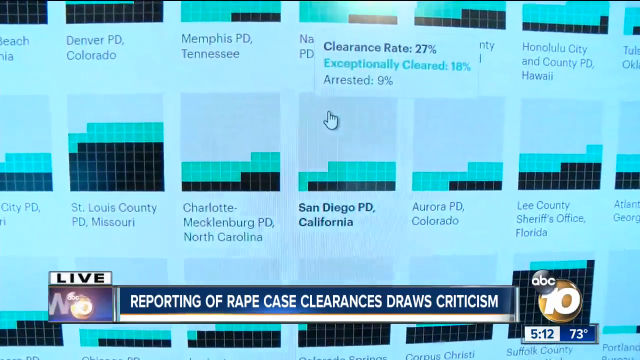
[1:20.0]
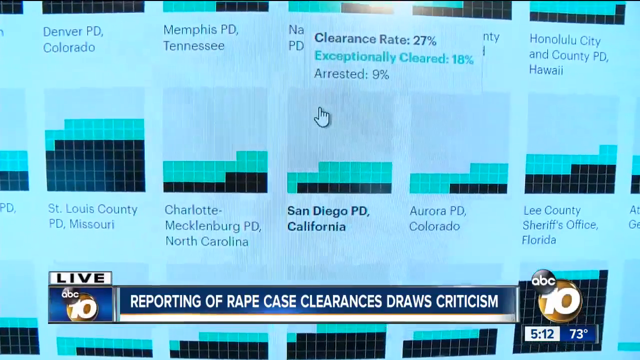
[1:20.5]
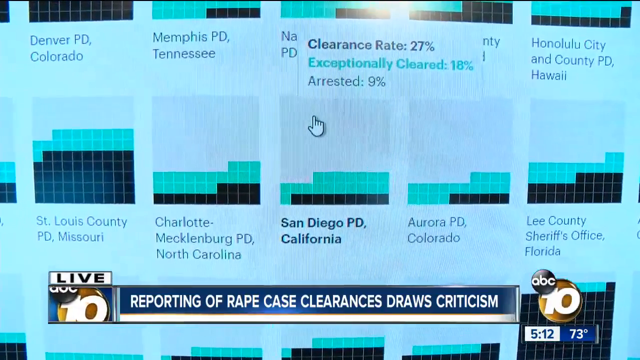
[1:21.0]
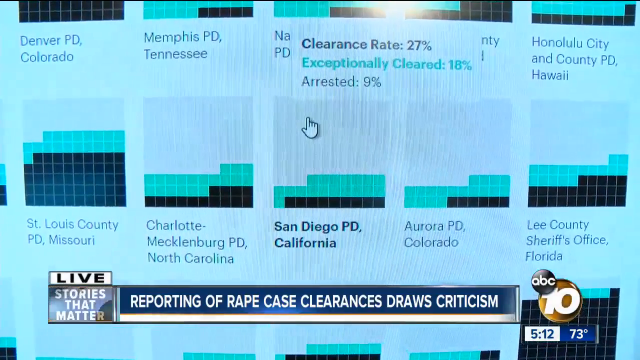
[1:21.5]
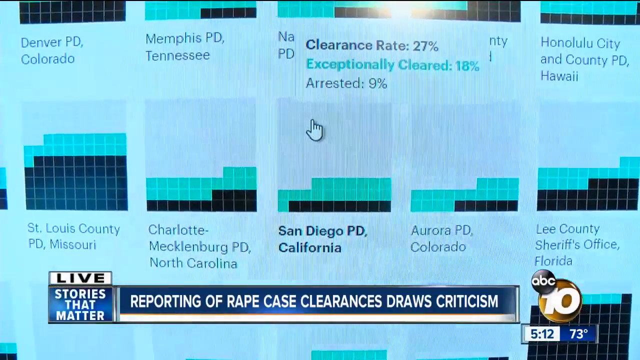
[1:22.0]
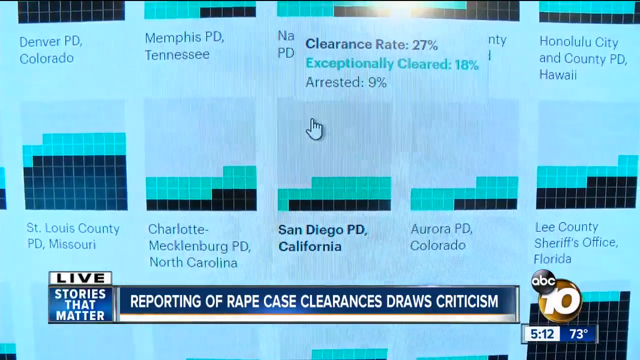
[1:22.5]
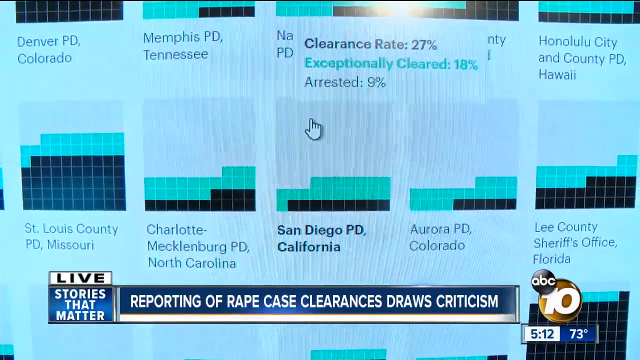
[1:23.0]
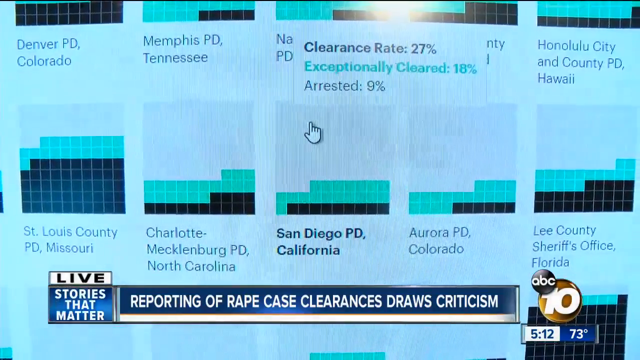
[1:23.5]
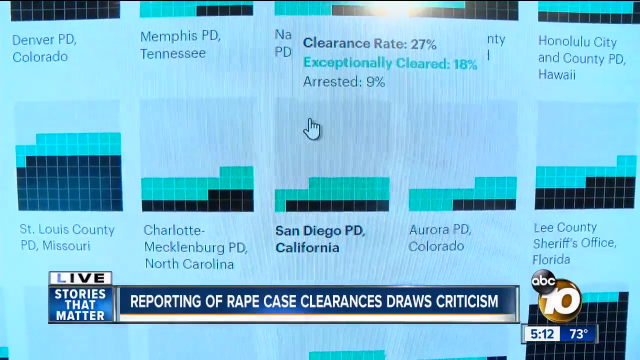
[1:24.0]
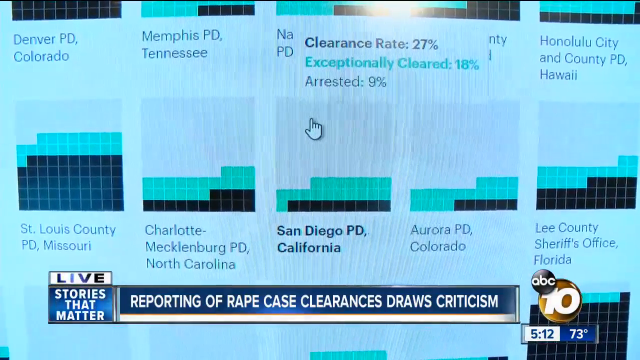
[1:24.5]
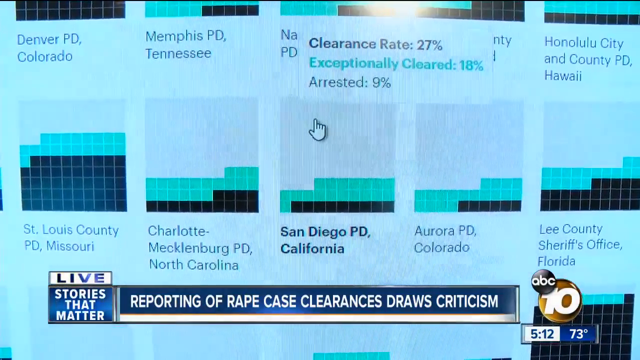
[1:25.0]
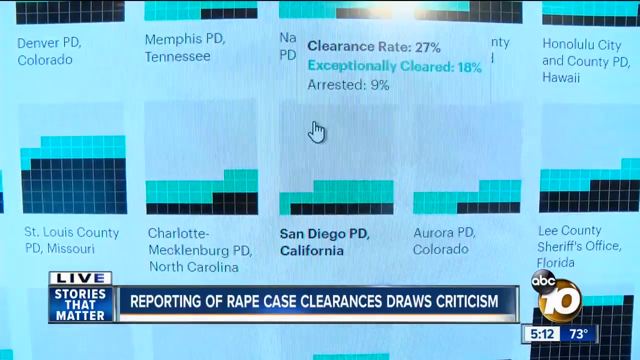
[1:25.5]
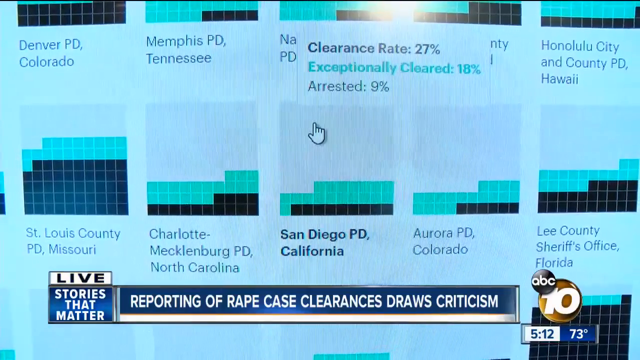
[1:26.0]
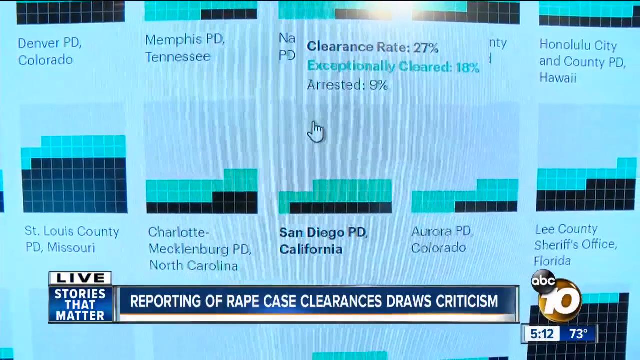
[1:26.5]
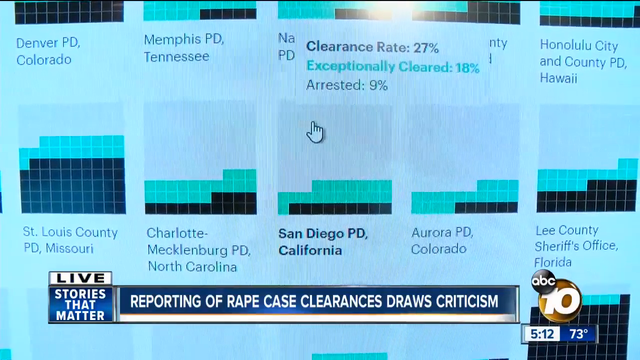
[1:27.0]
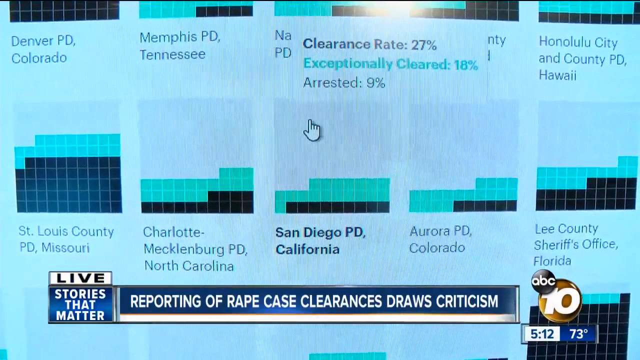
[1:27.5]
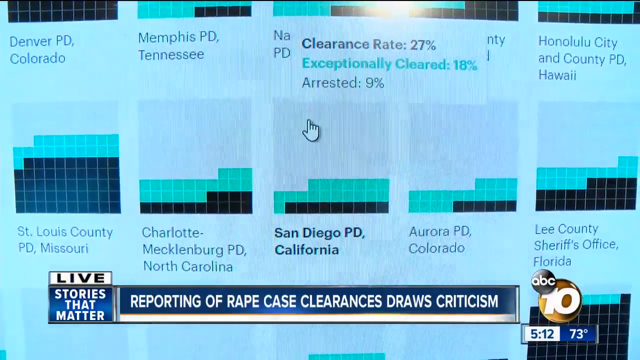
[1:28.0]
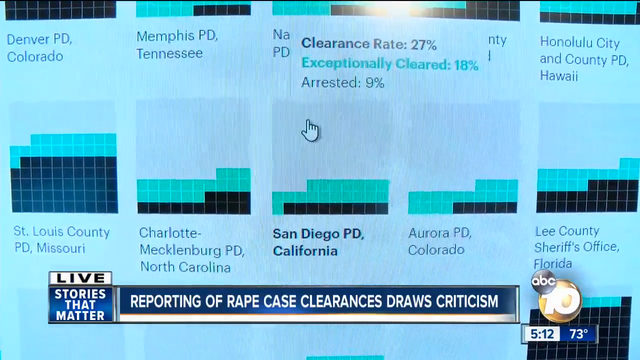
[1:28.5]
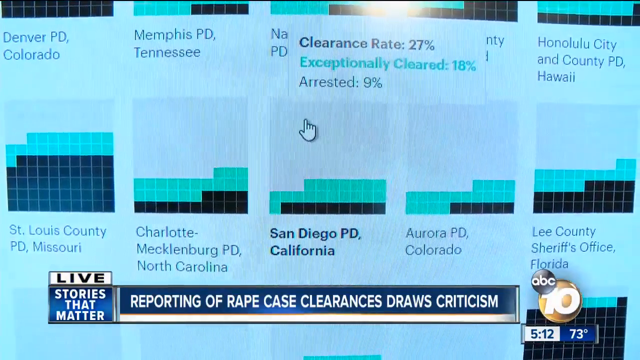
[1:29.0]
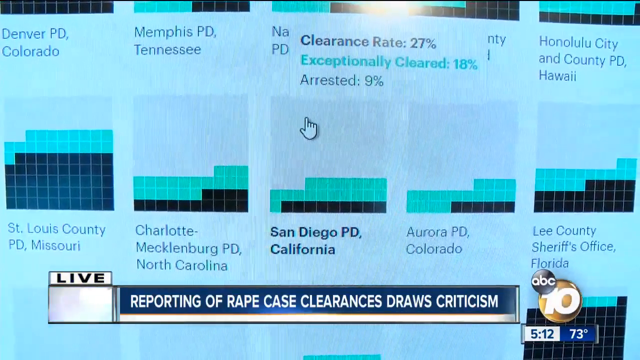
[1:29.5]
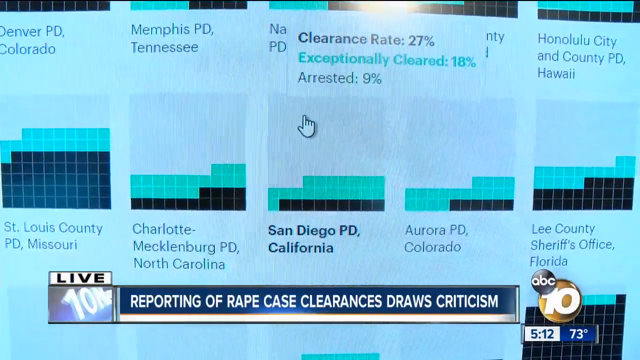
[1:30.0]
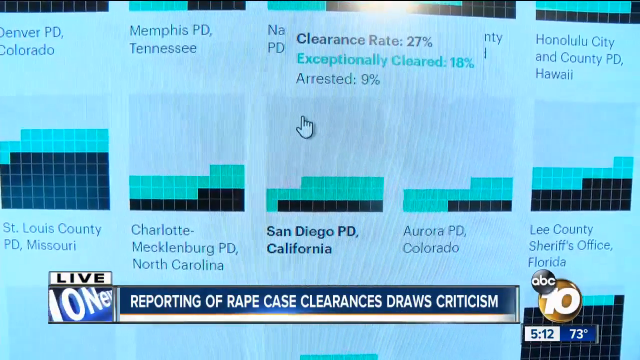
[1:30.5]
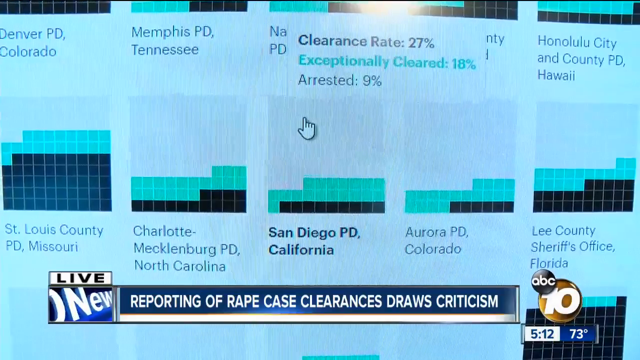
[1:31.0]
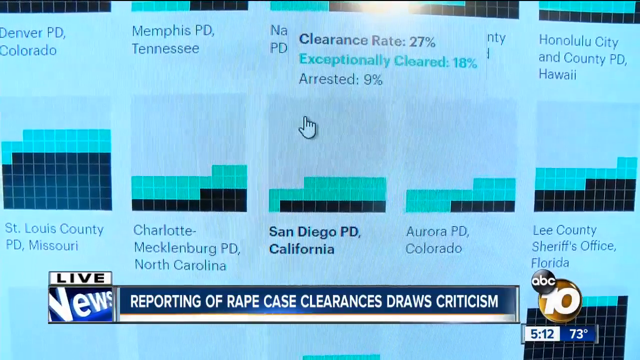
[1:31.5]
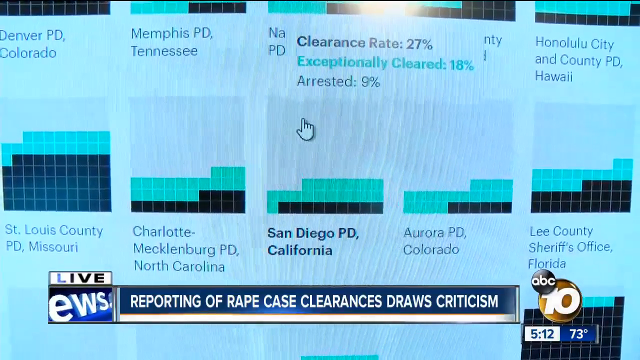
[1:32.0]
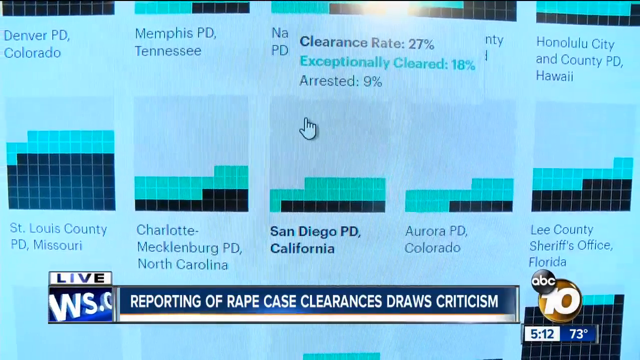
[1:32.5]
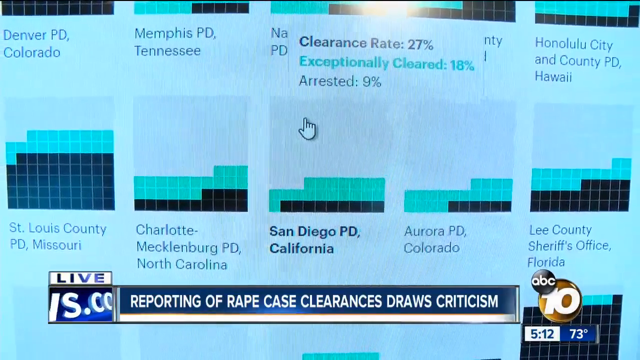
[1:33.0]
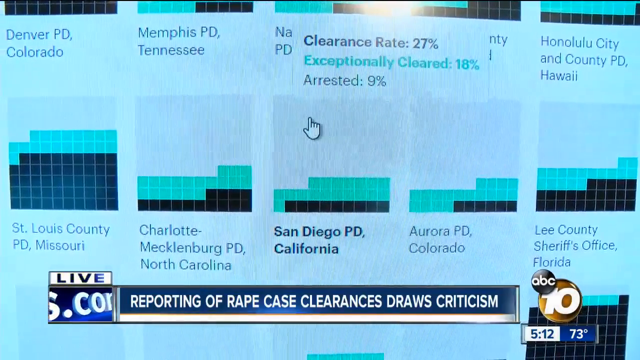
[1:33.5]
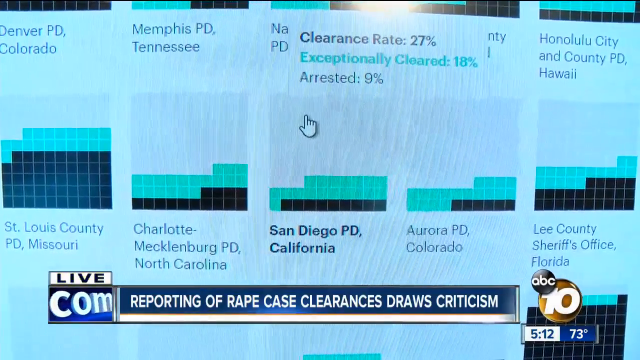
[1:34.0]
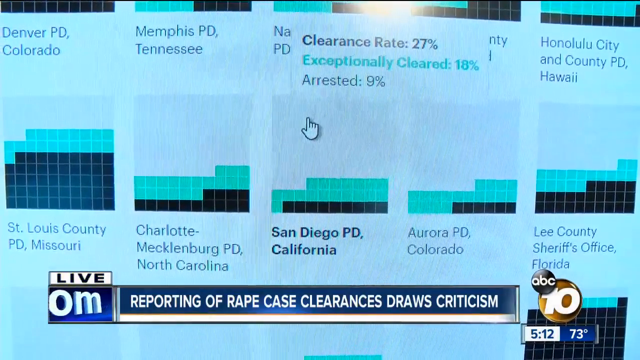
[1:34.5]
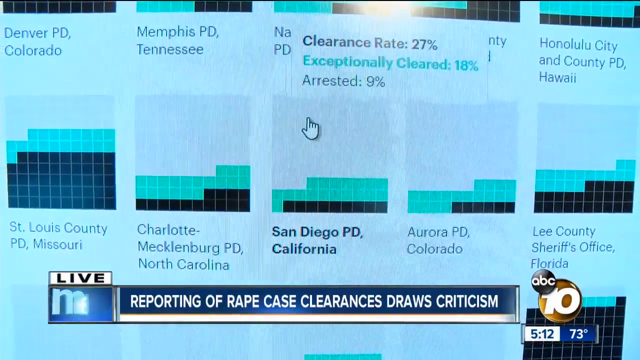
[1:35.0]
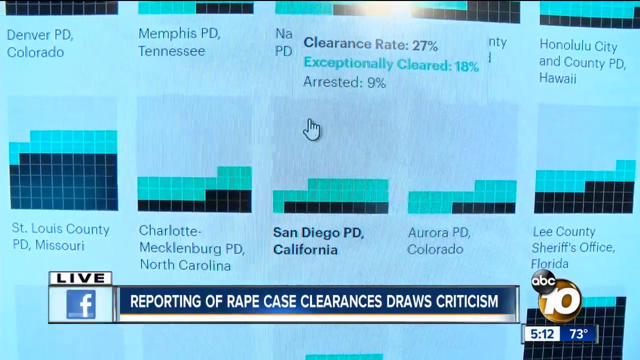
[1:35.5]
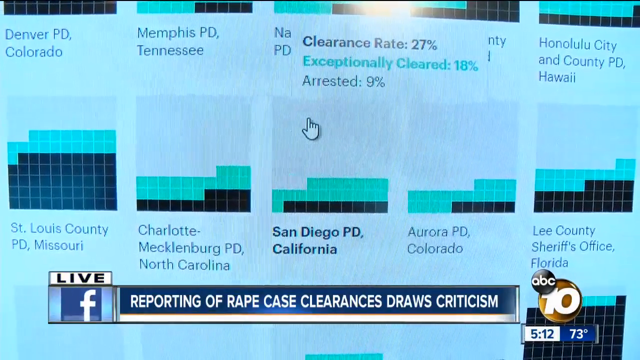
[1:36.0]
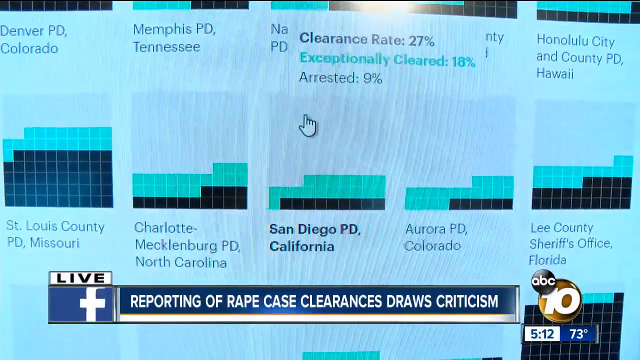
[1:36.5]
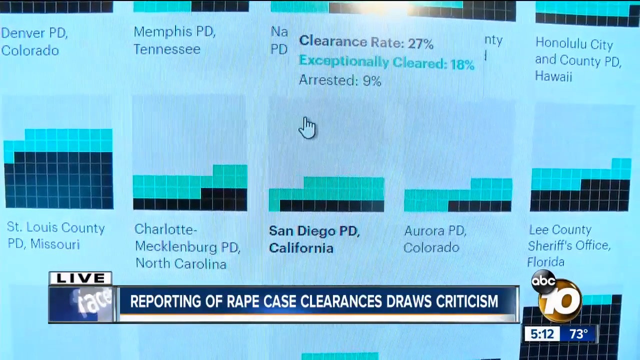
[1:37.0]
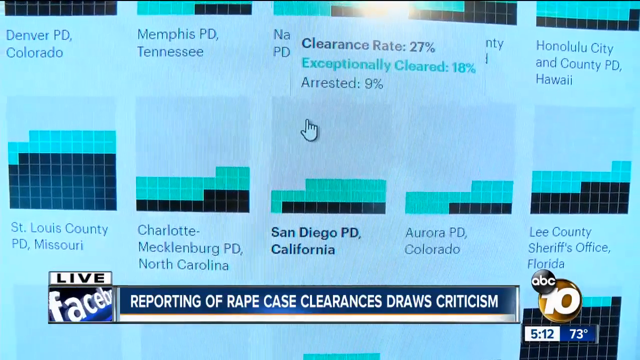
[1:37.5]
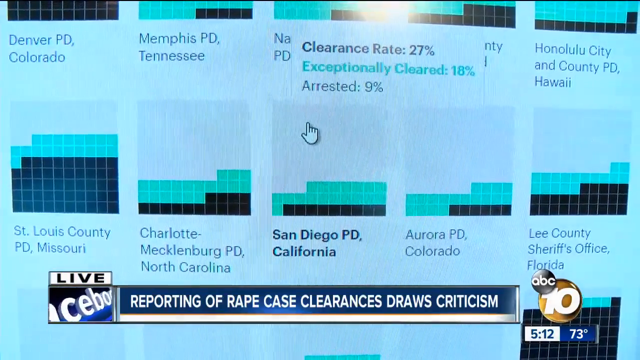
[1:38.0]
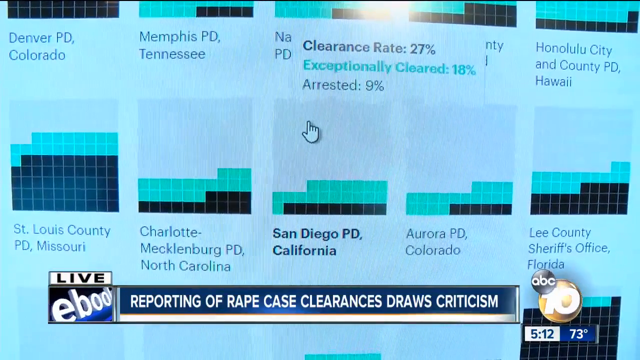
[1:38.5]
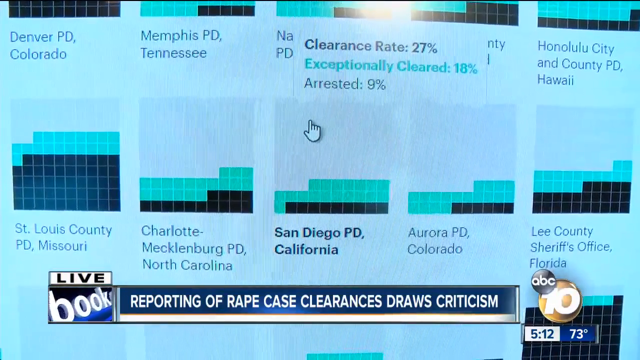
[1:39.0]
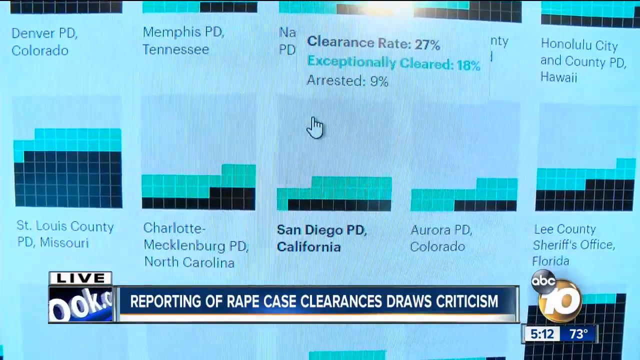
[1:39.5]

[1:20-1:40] The statistics move on to other departments: the Honolulu City and County police department in Hawaii, the St. Louis County Police Department in Missouri, the Charlotte Mecklenburg Police Department in North Carolina, the San Diego Police Department in California, the Aurora Police Department in Colorado, and the Lee County Sheriff's Office in Florida. The figures show the clearance rate higher than the arrest rate.